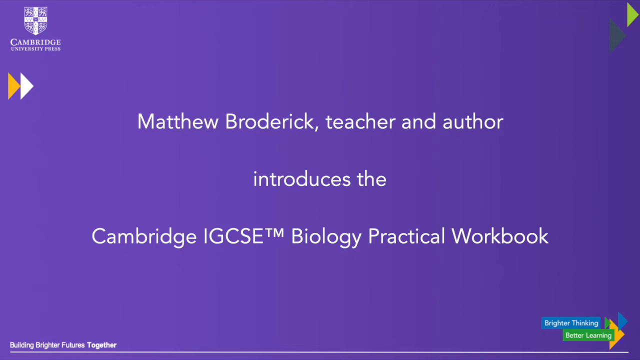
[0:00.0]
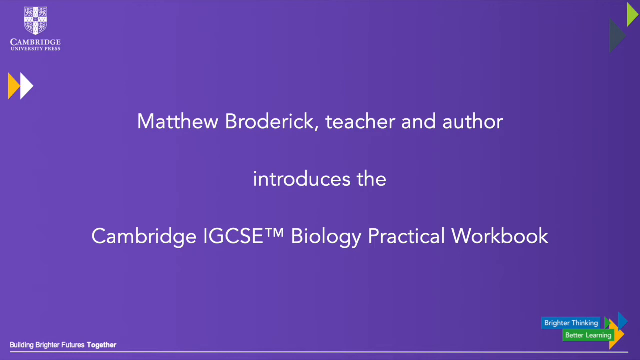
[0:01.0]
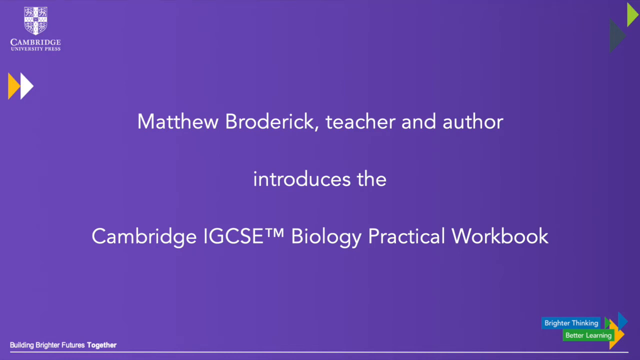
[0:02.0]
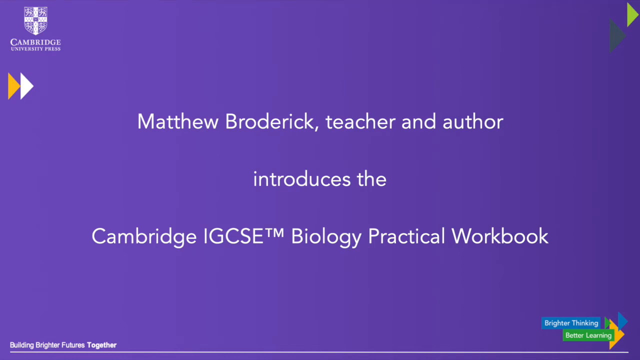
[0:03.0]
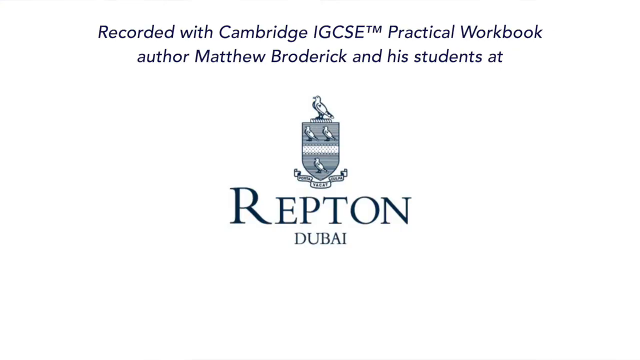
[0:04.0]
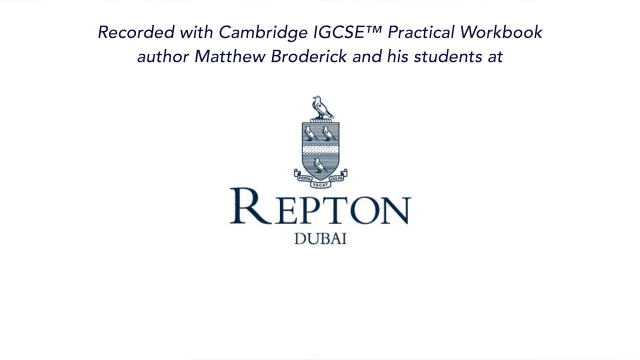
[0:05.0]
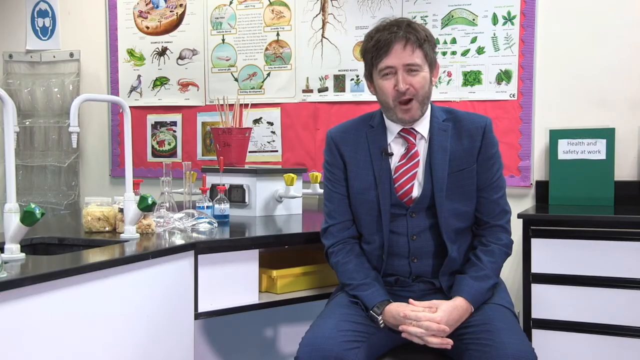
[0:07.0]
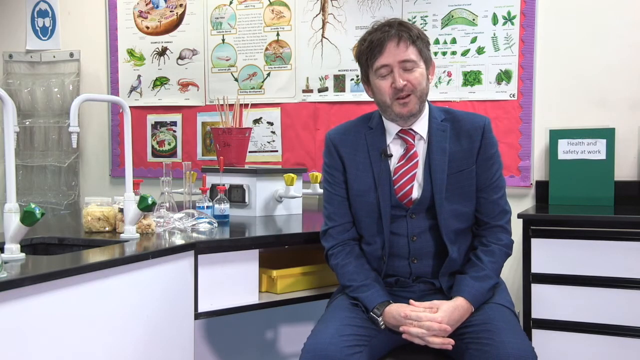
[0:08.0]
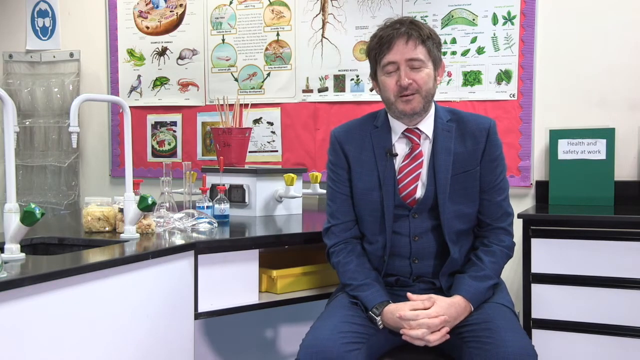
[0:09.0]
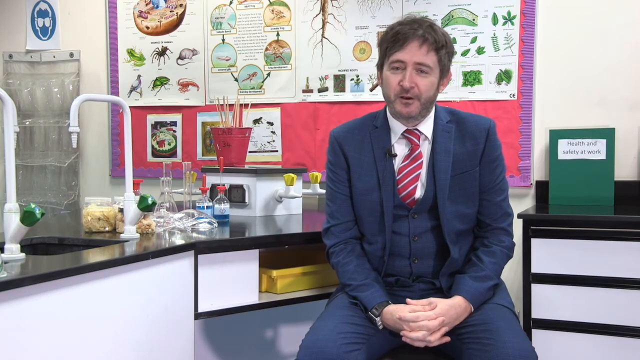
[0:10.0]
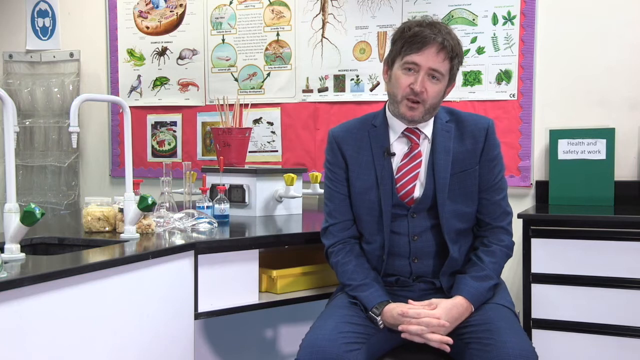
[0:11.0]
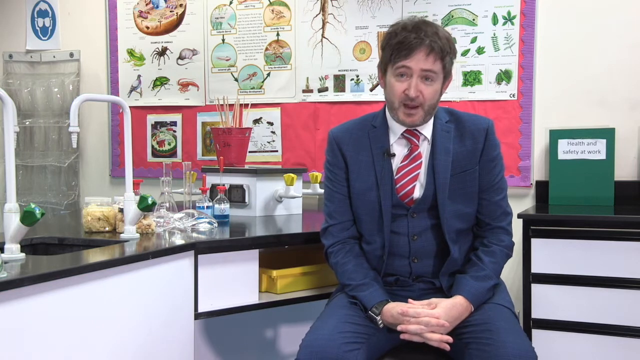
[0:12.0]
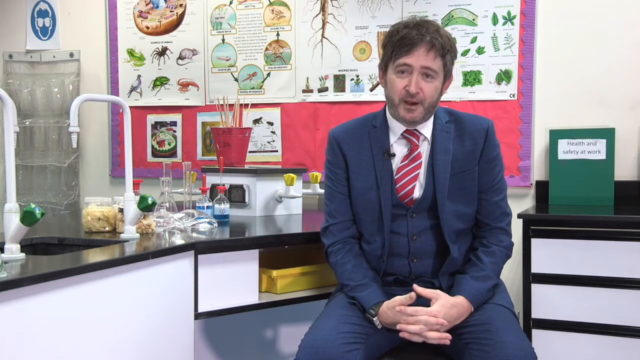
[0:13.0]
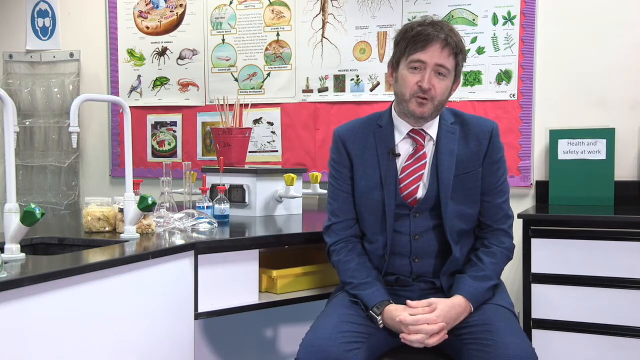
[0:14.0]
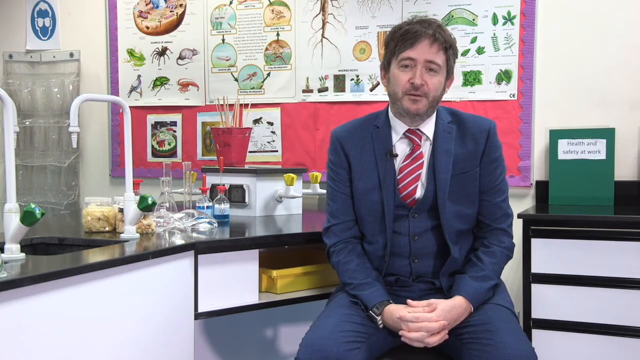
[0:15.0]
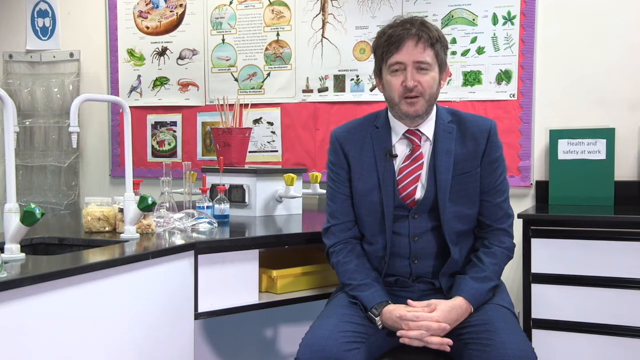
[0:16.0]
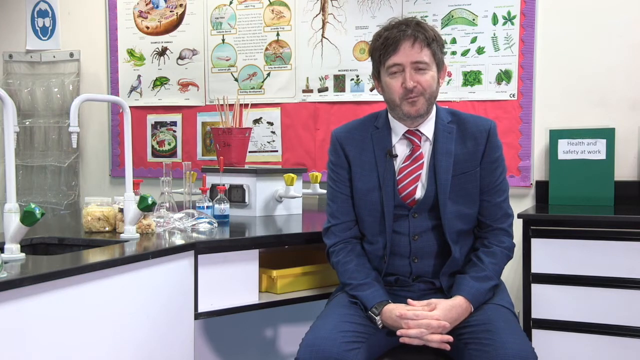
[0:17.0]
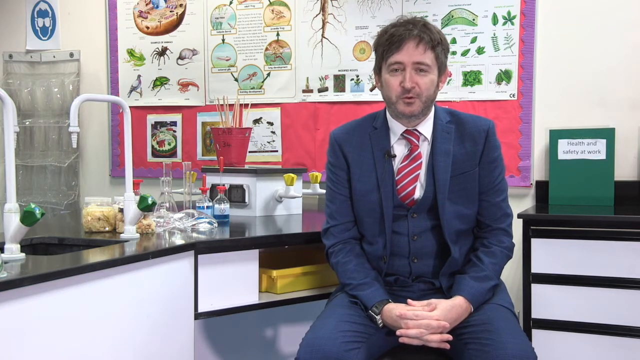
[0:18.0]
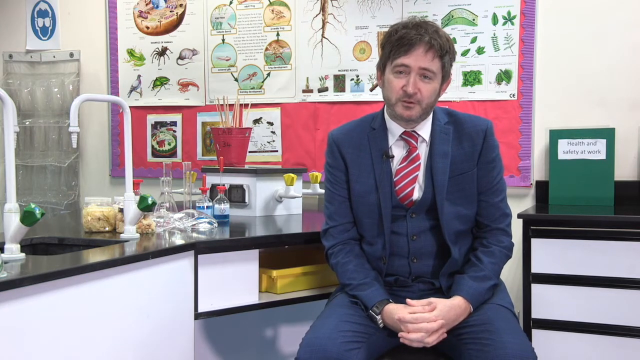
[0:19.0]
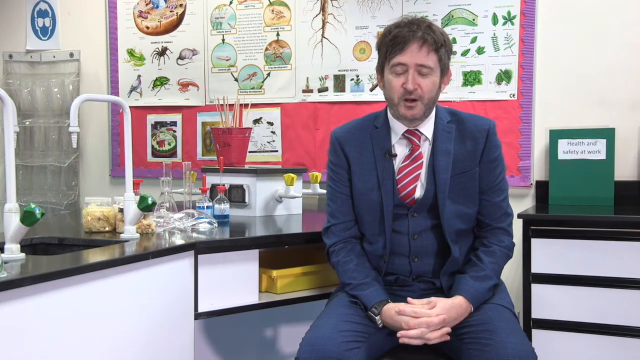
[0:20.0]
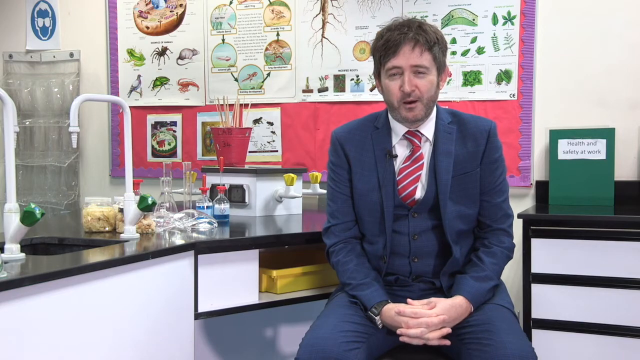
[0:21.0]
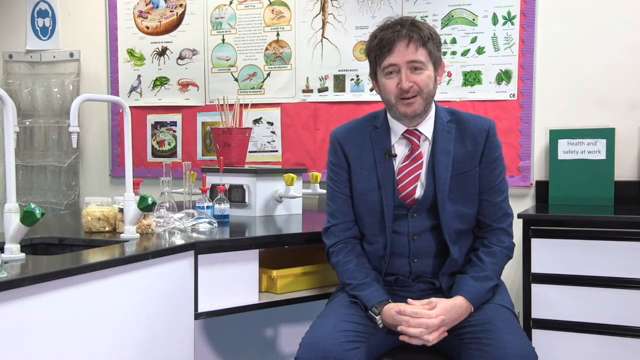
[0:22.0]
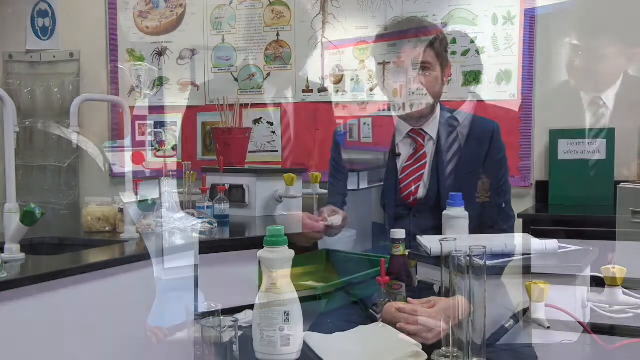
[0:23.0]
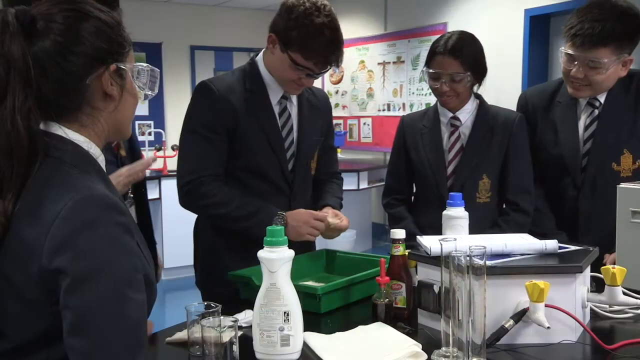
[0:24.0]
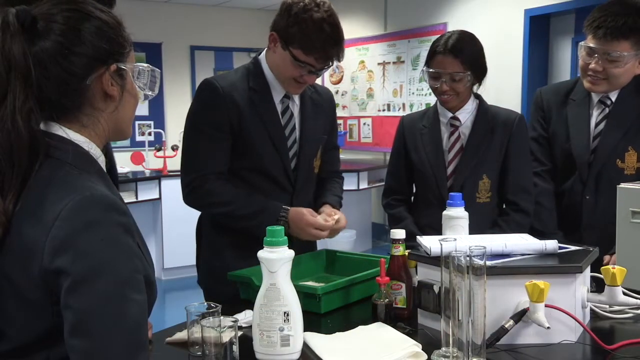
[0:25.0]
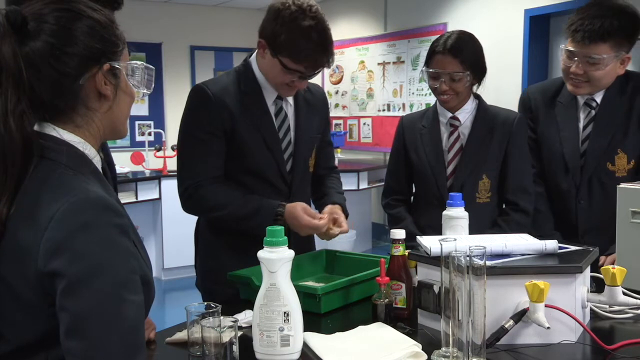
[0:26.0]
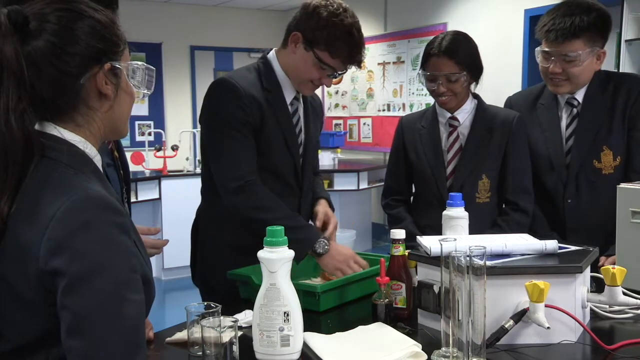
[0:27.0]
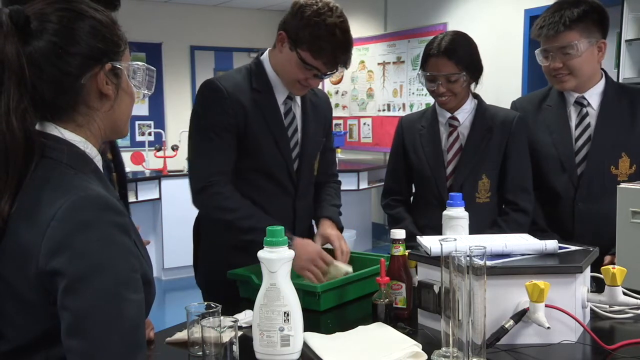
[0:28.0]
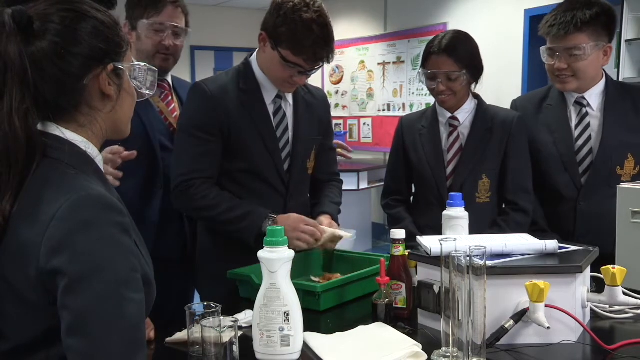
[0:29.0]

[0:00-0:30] The video opens on a purple background with white writing that reads "Matthew Broderick, teacher and author, introduces the Cambridge IGCSE Biology Practical Workbook." A logo in the top left appears to say Cambridge University. The video then moves to another page with a white background fading to grey-black at the bottom. The words "Repton Dubai" are in the middle with a crest, and at the top are the words "recorded with Cambridge IGCSE Practical Workbook author Matthew Broderick and his students at Repton Dubai." All of these words are written in navy blue. Next, a man wearing a three-piece suit, with a smiley face and slightly messy hair, is sitting on a chair in what looks like a classroom. He appears to be talking to the audience; his head moves to the left and to the right, and his hands are folded in front of him with his fingers intertwined.